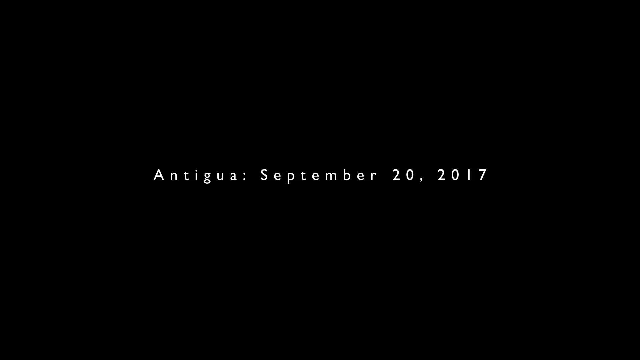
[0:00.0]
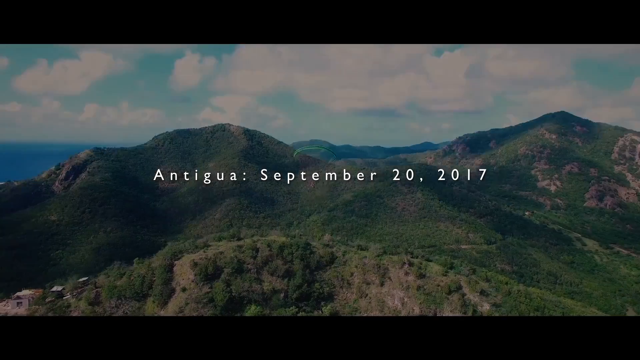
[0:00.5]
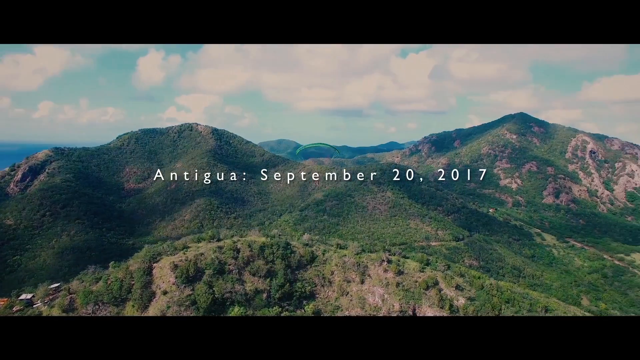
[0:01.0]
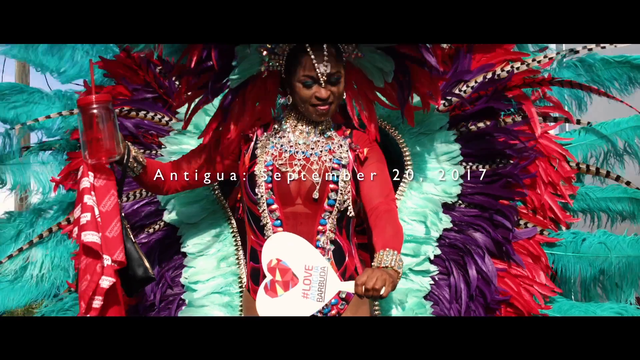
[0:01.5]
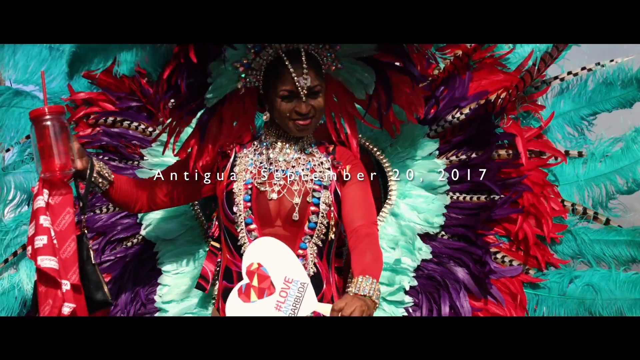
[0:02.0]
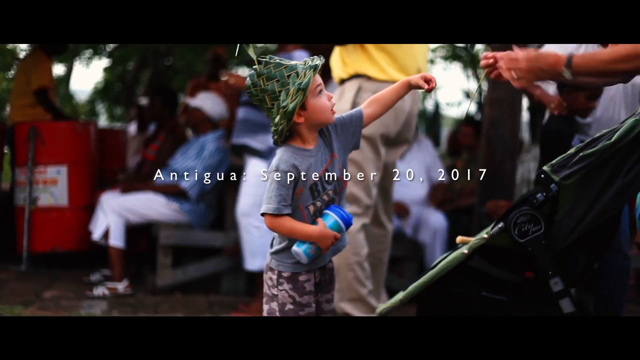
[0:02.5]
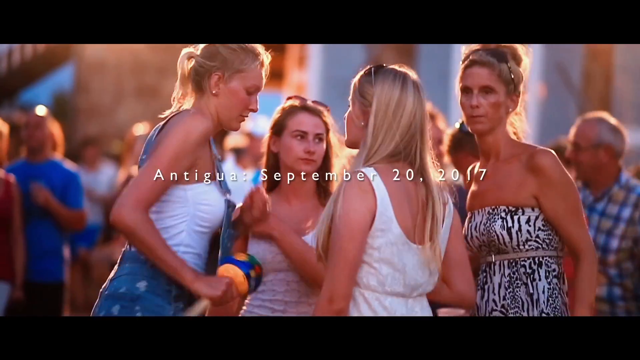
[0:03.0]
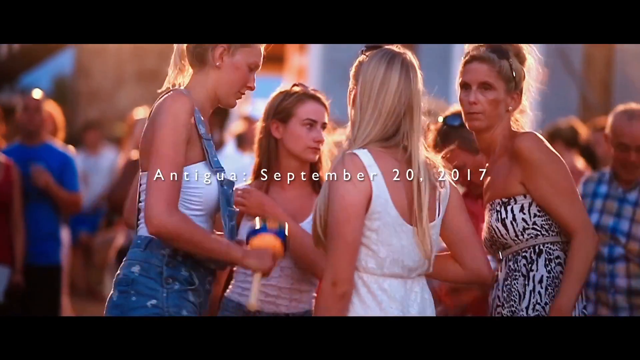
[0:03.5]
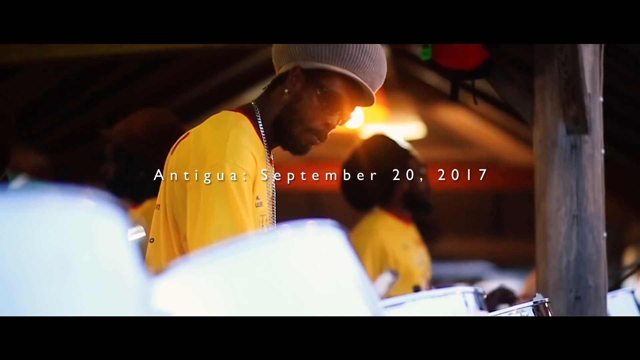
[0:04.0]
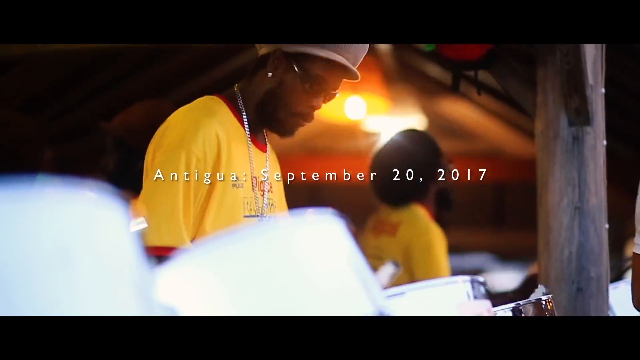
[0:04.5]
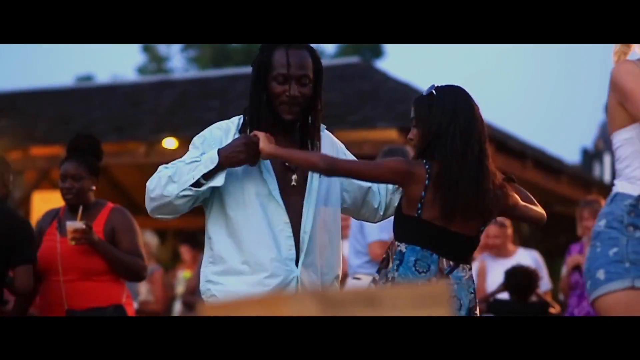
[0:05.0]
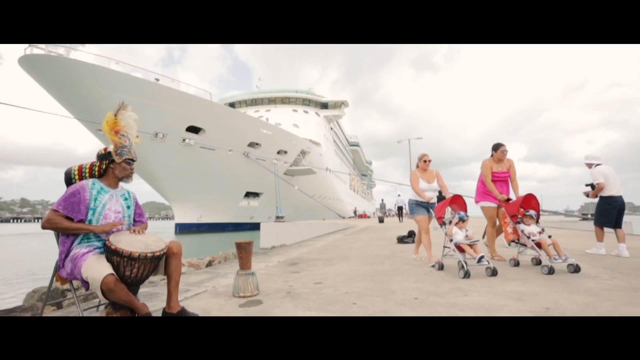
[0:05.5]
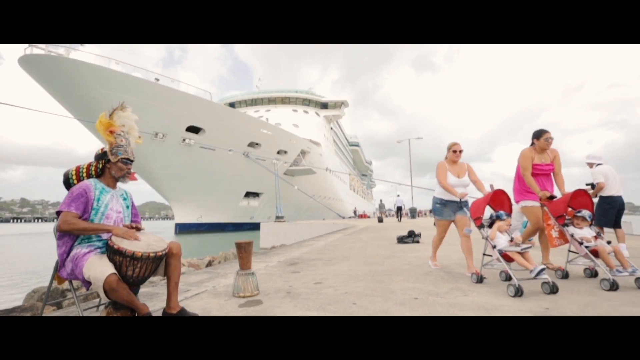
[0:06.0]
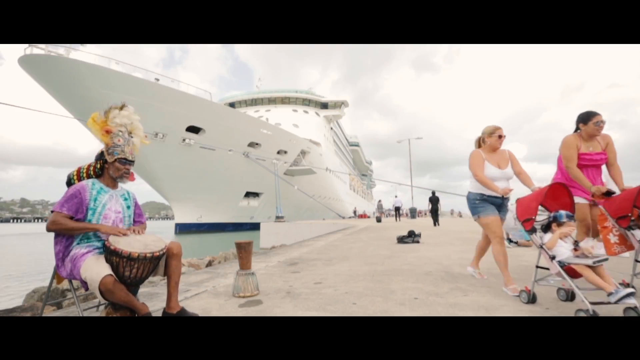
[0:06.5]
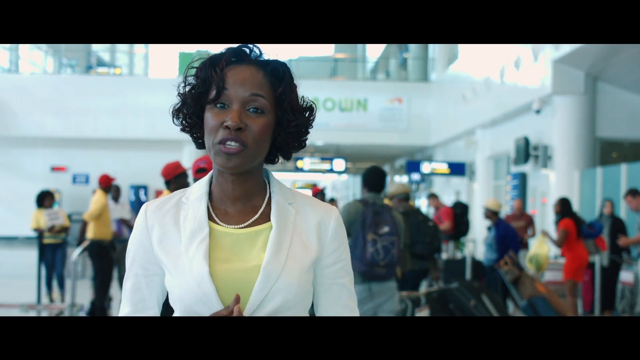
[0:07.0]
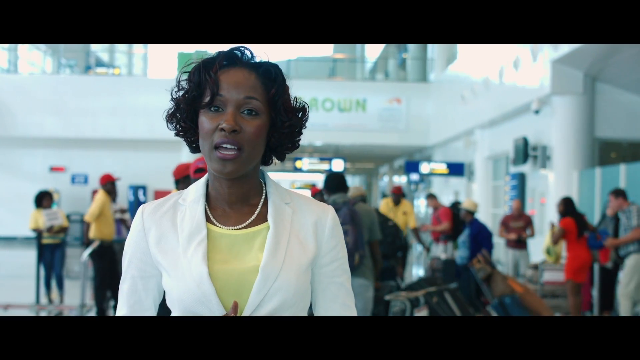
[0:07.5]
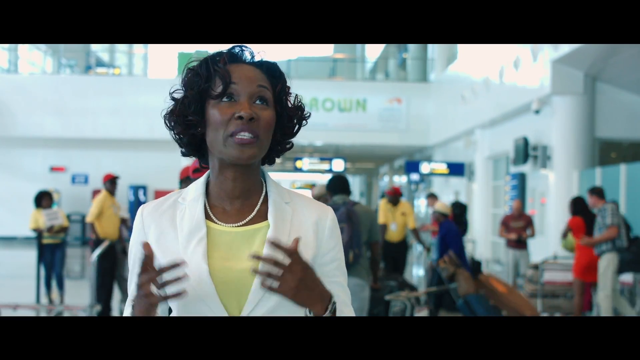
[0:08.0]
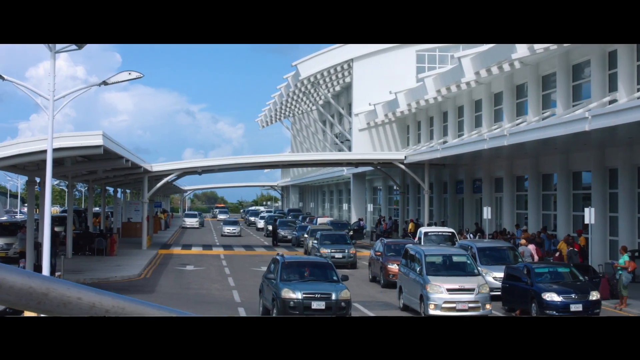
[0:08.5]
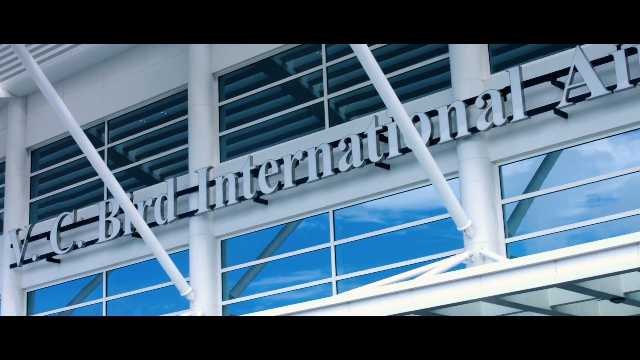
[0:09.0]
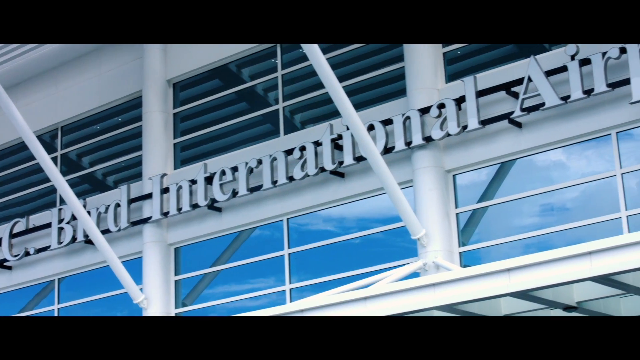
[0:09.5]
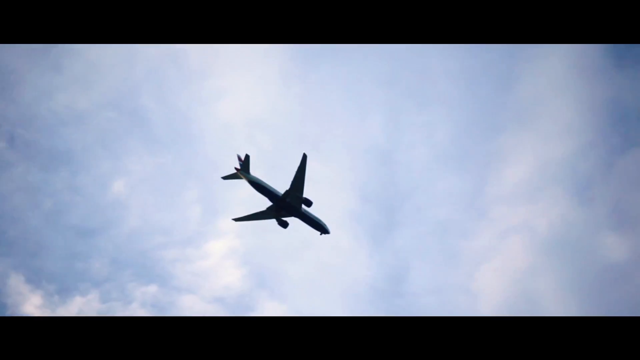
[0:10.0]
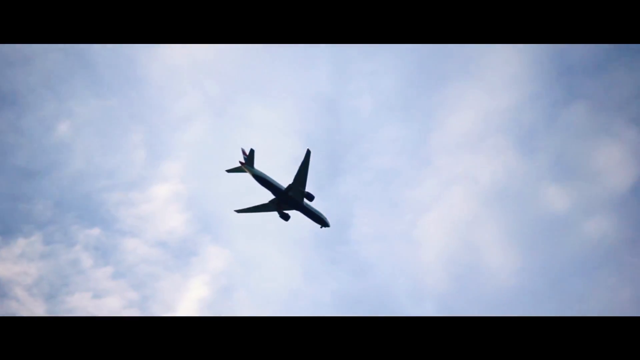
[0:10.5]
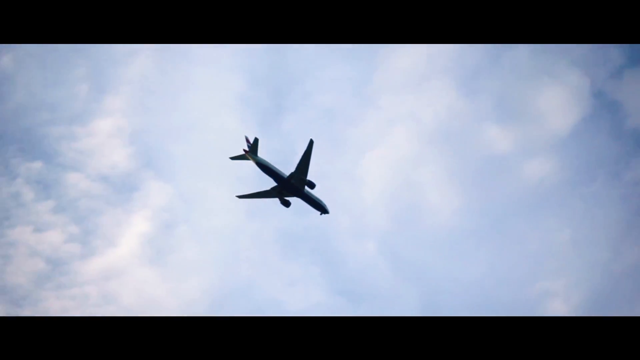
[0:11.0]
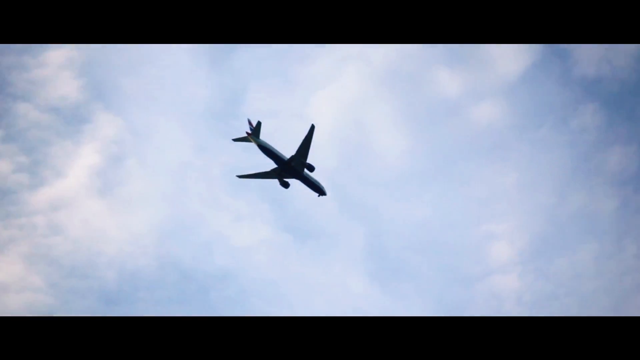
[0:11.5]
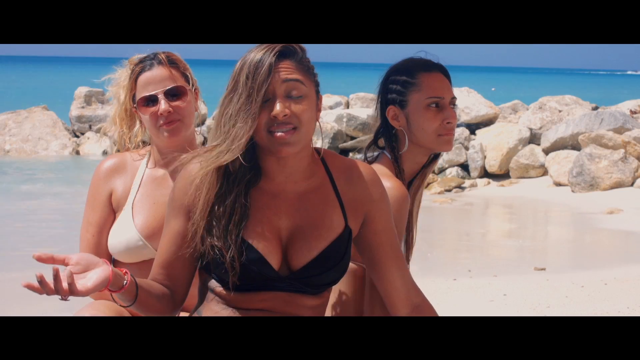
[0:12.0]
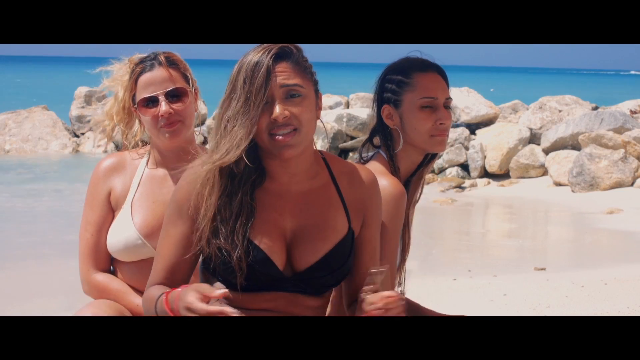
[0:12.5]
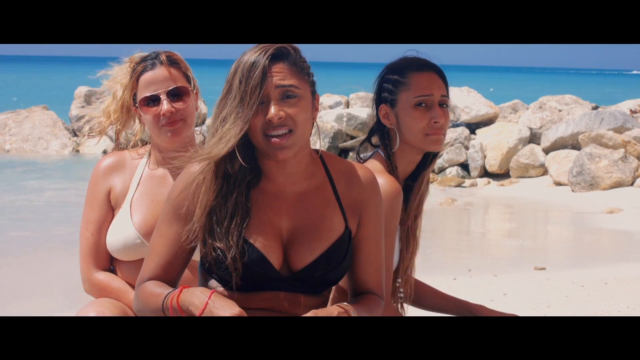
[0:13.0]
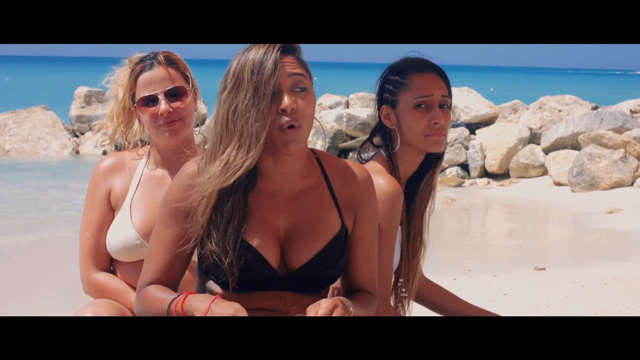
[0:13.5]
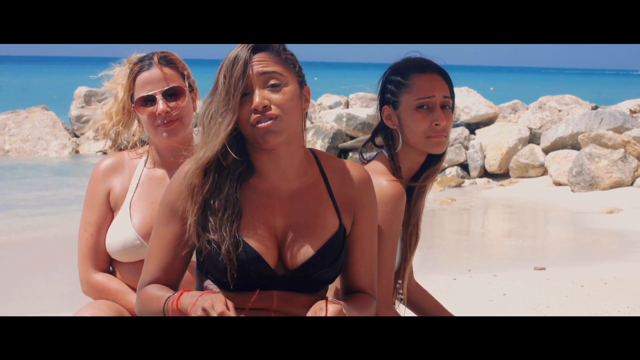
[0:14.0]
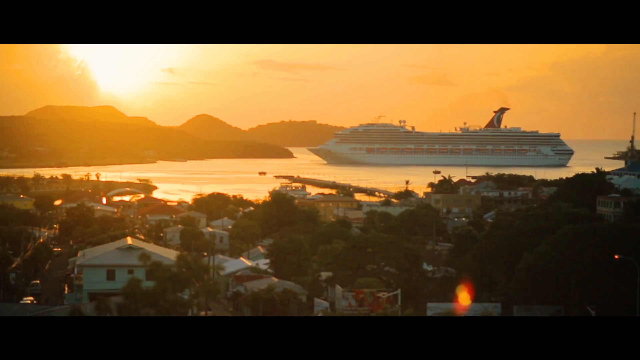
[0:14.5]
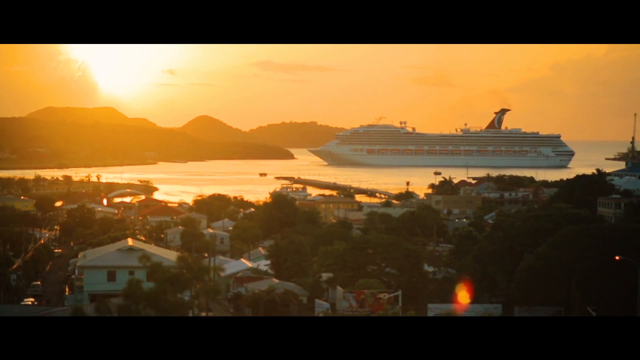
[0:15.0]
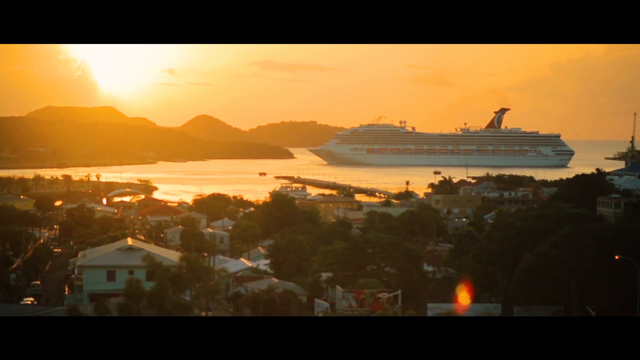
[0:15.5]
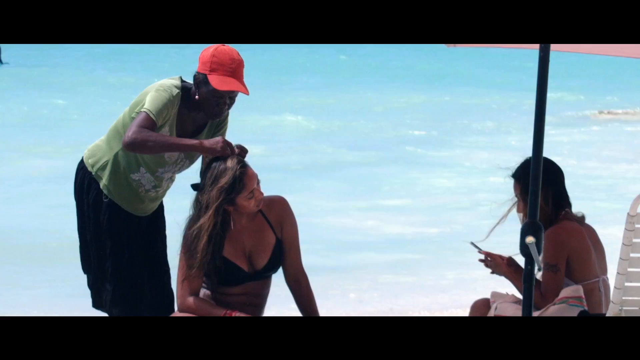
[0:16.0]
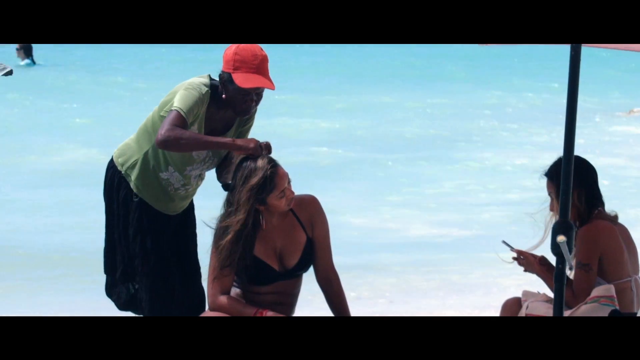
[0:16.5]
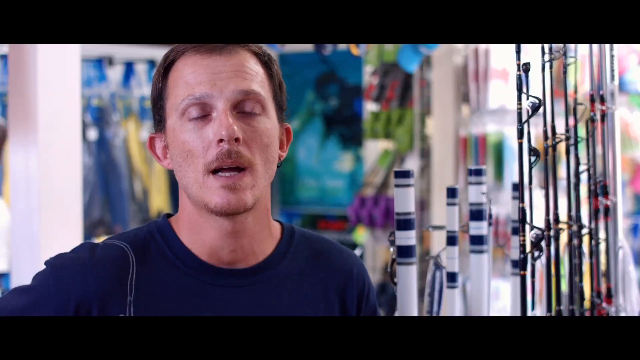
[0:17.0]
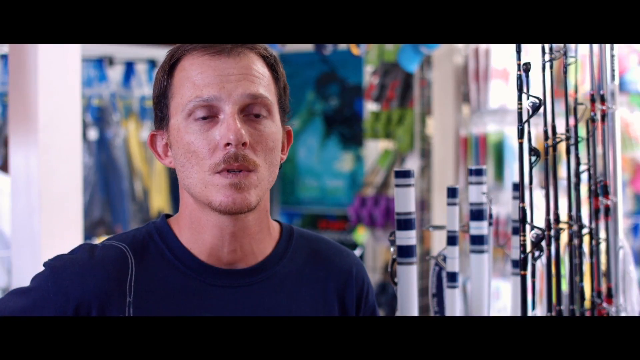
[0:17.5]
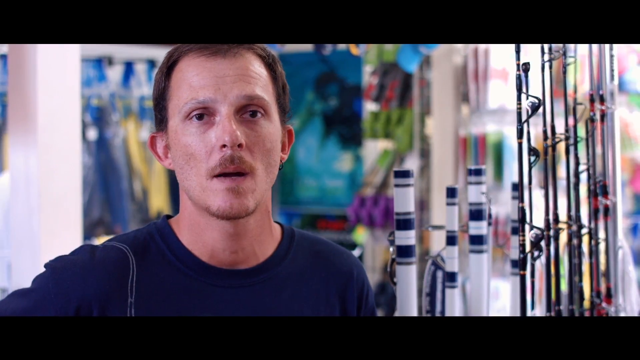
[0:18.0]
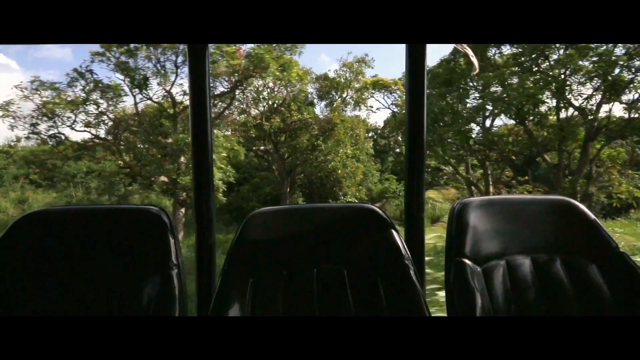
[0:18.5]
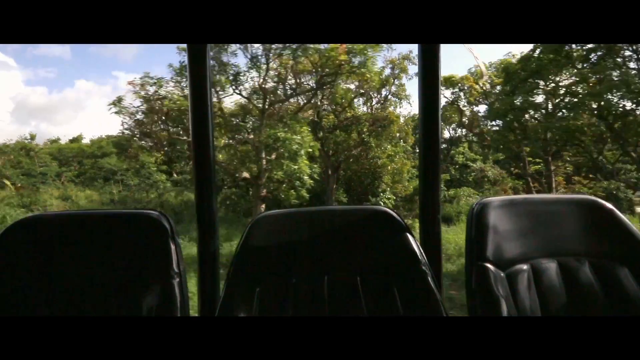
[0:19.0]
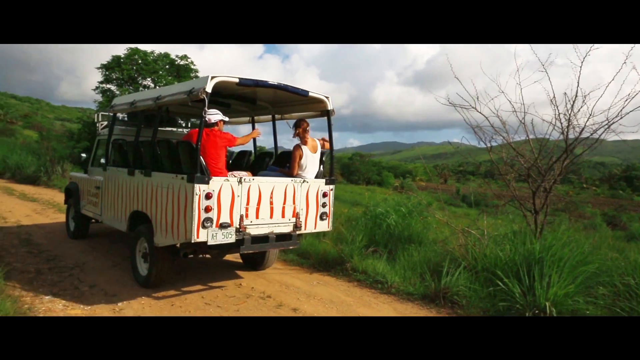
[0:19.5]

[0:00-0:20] A travel video opens on a black screen with the text "Antigua September 20 2017." Shots of the area follow: mountains, then an African dancer in a red outfit with an enormous feathery attachment behind her, and a little kid holding his hand out. Four females dance in the street; it looks like a mother and three younger women, the younger ones each wearing white. A man in a yellow shirt dances, then a man in a white shirt with long dreads dances with a woman. A ship that looks like a cruise liner appears as people walk by, including two women each pushing a carriage with a baby in it, both wearing hats on their heads to keep the sun off. On the left, a man pounds on a bongo drum; he wears purple tie-dye and pink-beige shorts. A black woman in a yellow shirt, a white jacket and a pearl necklace stands in a public place that looks almost like an airport, talking to the camera. Outside the airport, a sign reads "vc bird international airport," and an airplane flies through the sky. Three women are on a beach; one of them, with long brown hair, talks to the camera. The bay appears with a cruise liner parked in the water.